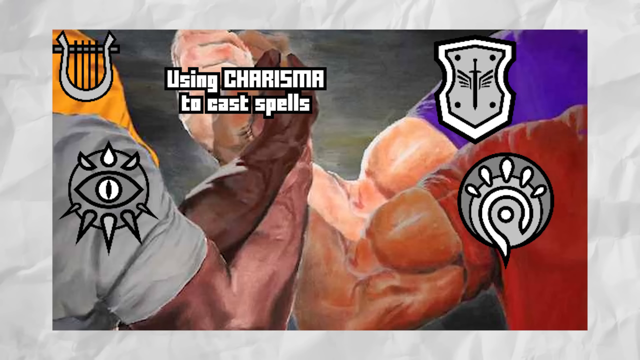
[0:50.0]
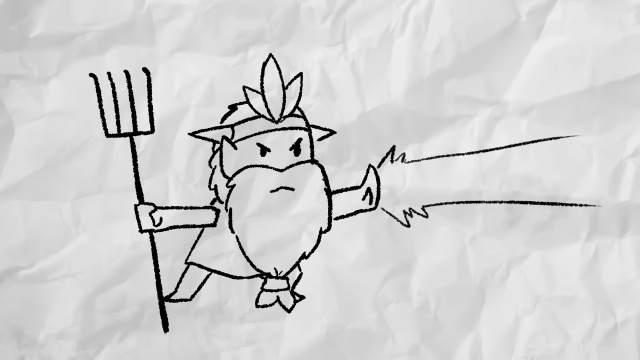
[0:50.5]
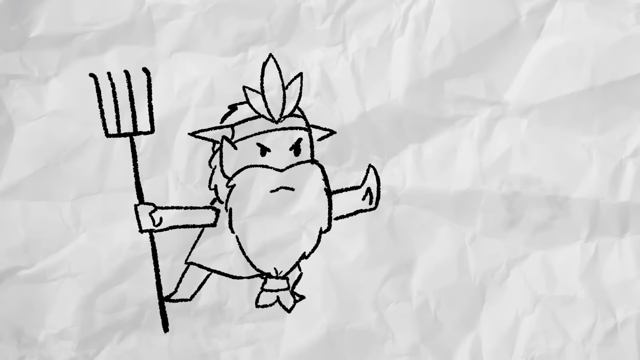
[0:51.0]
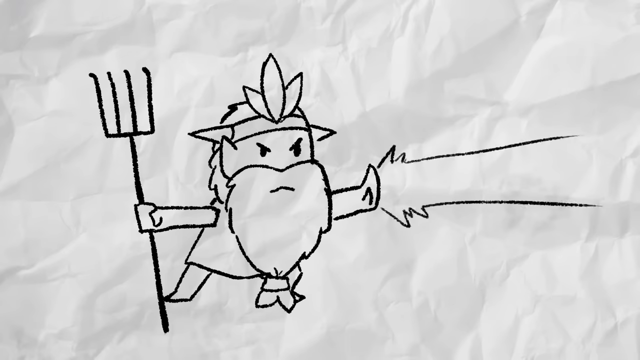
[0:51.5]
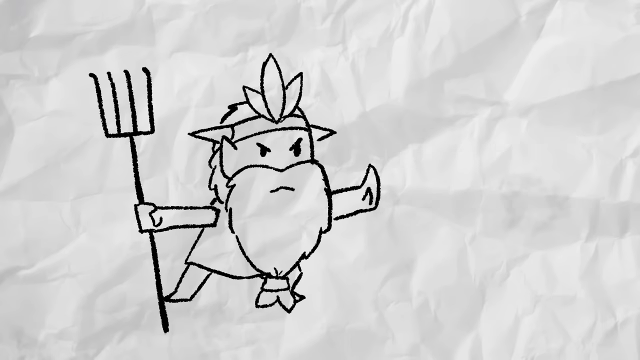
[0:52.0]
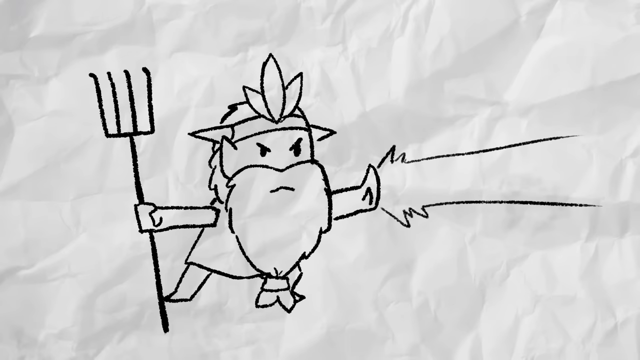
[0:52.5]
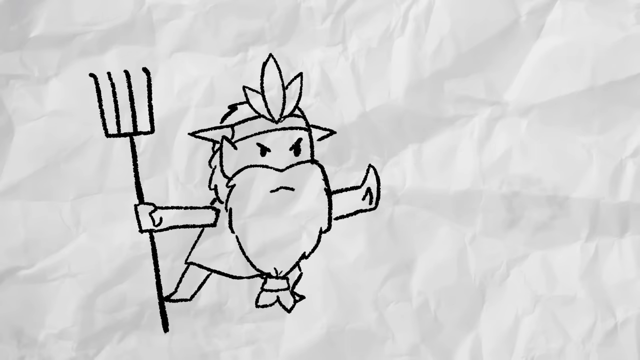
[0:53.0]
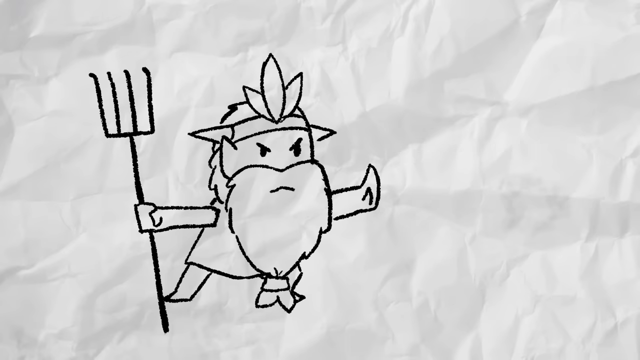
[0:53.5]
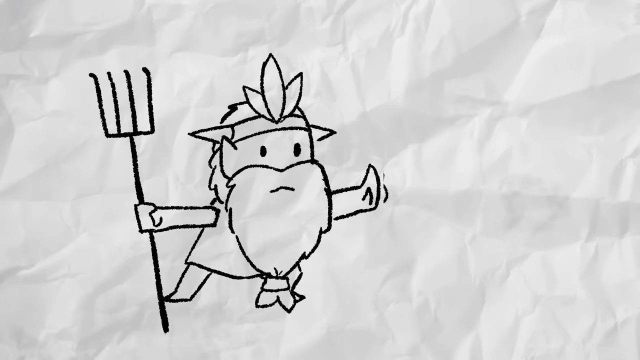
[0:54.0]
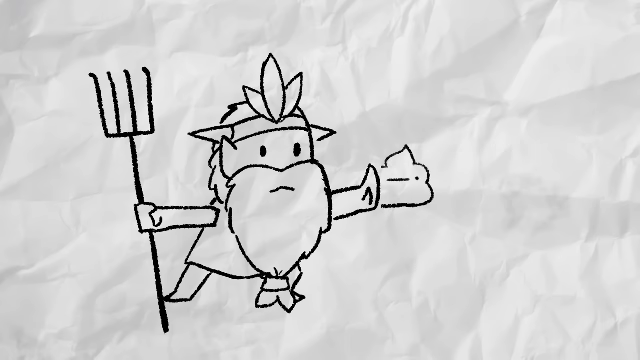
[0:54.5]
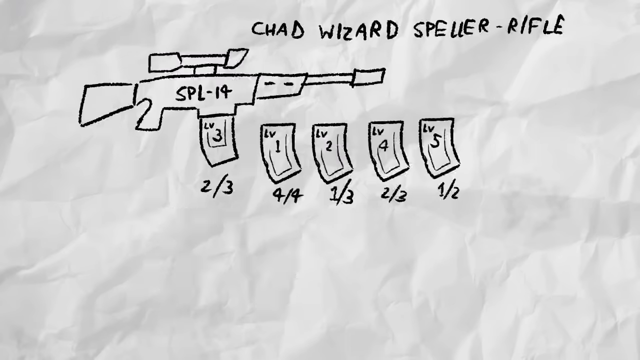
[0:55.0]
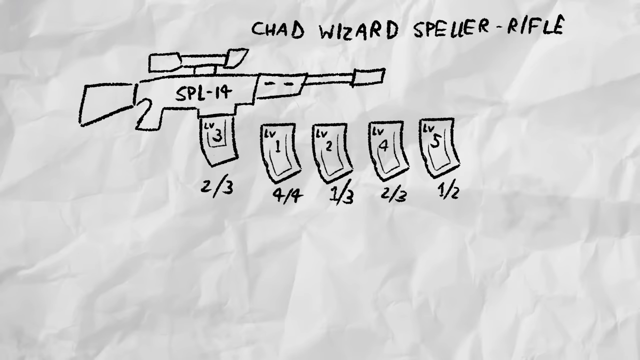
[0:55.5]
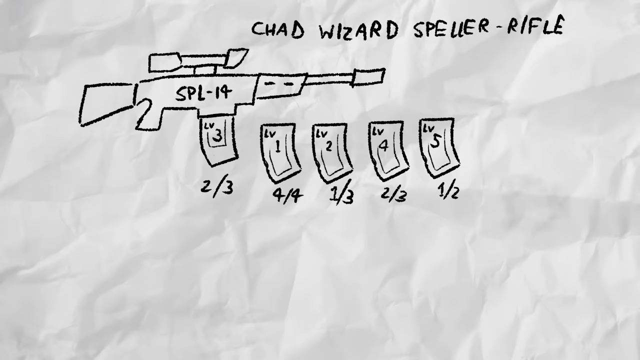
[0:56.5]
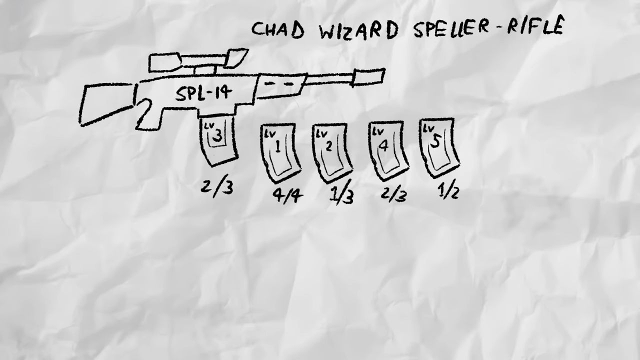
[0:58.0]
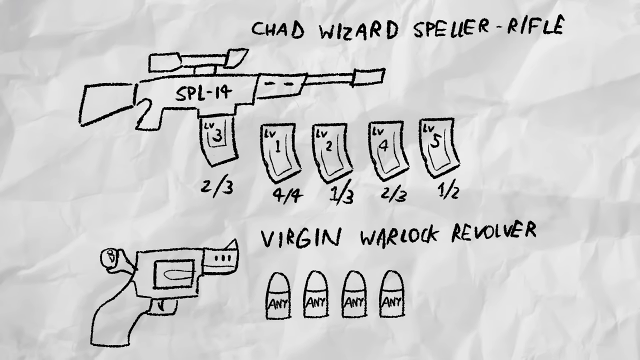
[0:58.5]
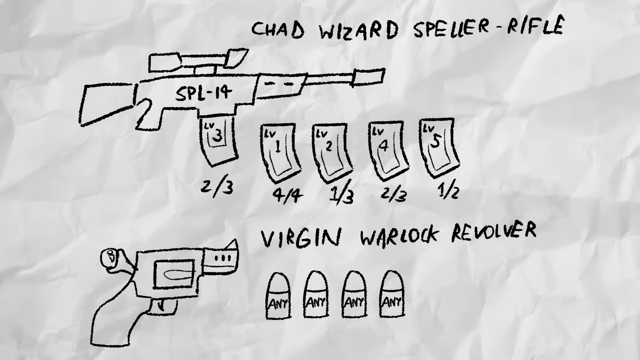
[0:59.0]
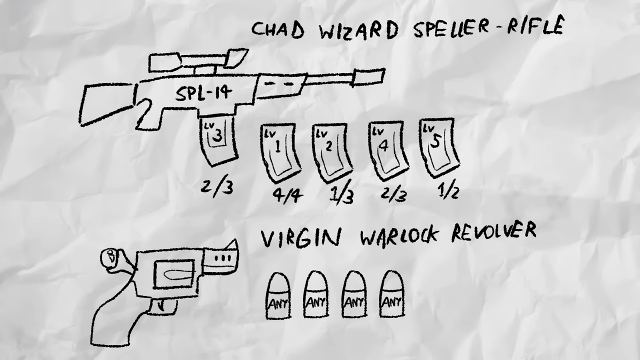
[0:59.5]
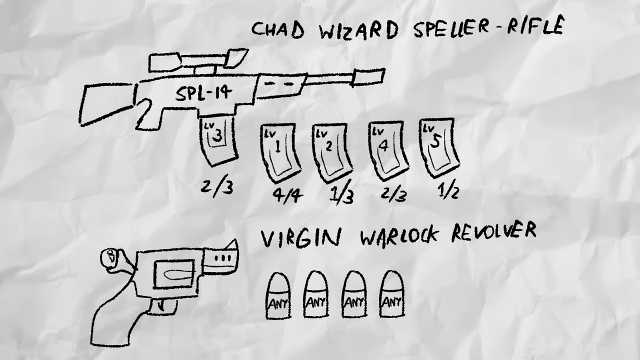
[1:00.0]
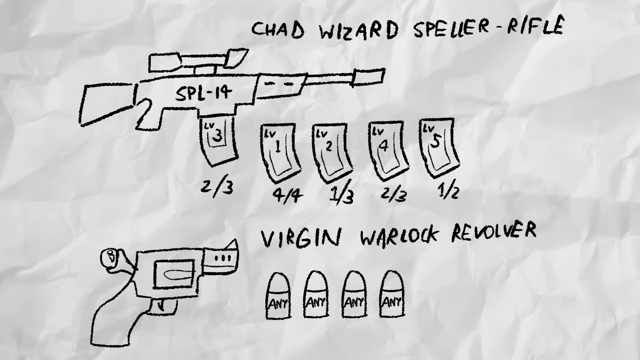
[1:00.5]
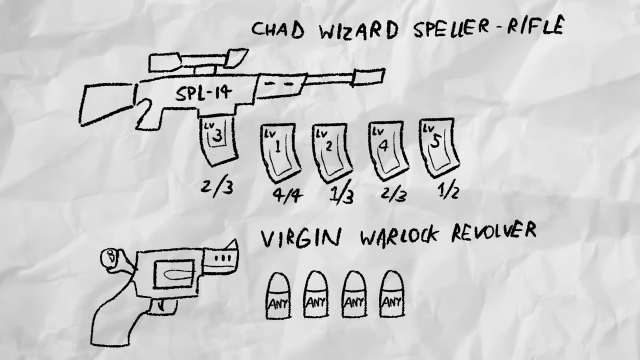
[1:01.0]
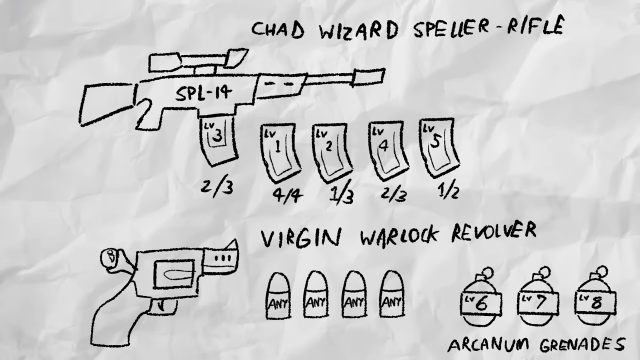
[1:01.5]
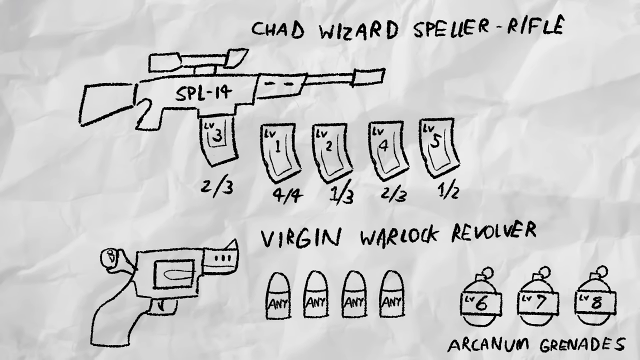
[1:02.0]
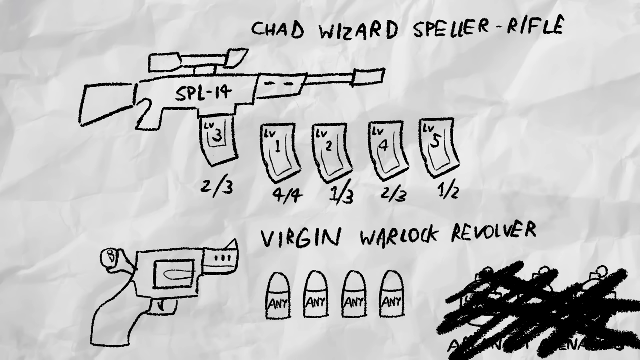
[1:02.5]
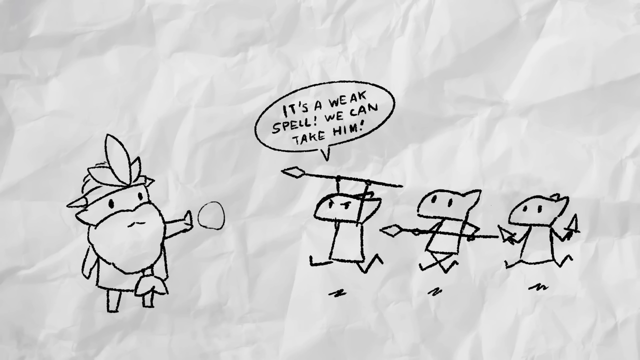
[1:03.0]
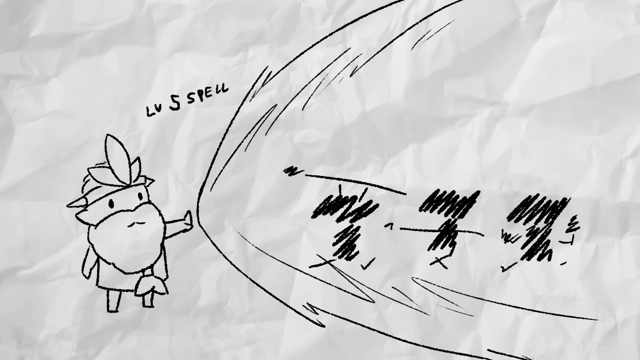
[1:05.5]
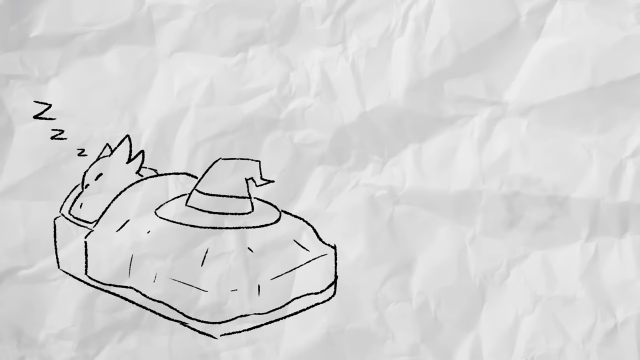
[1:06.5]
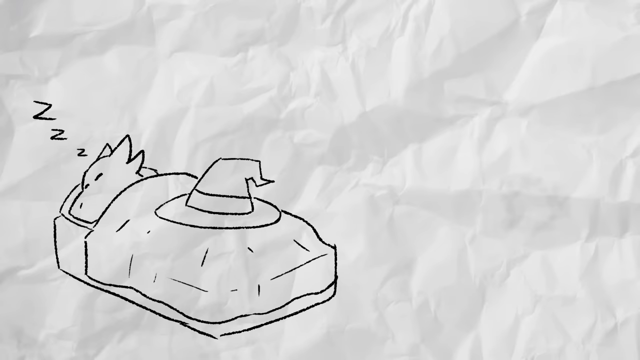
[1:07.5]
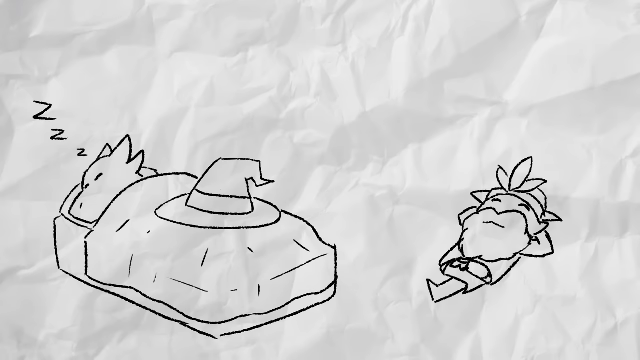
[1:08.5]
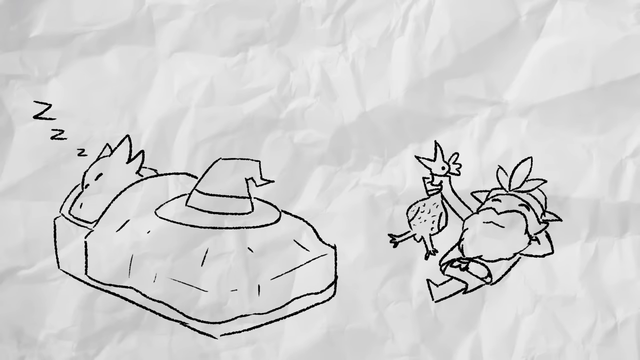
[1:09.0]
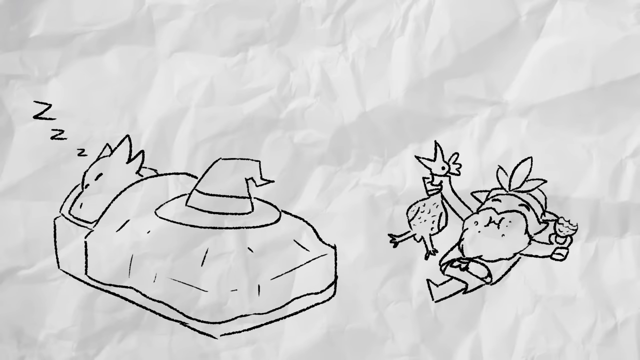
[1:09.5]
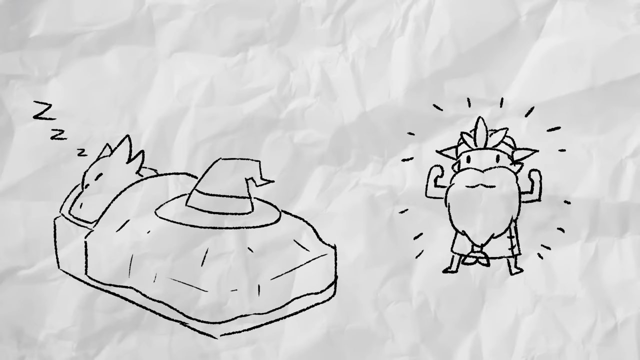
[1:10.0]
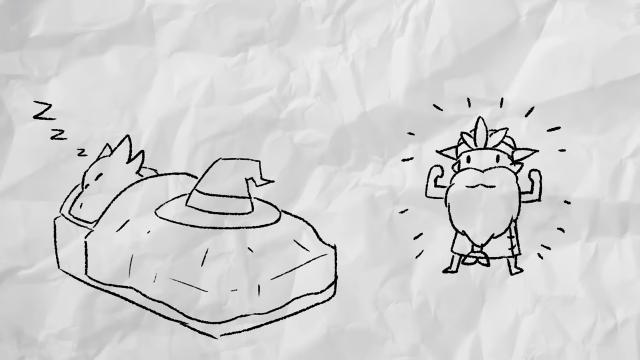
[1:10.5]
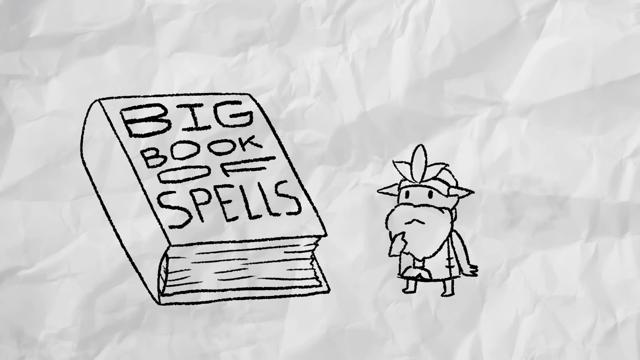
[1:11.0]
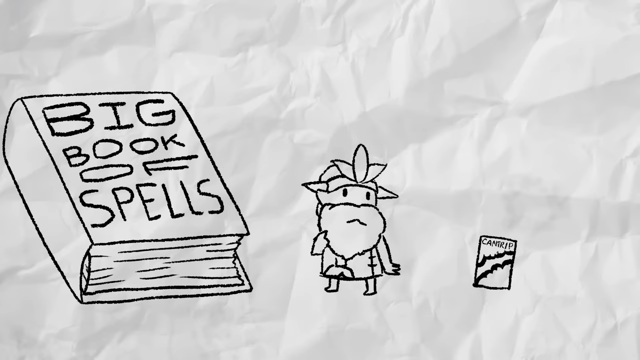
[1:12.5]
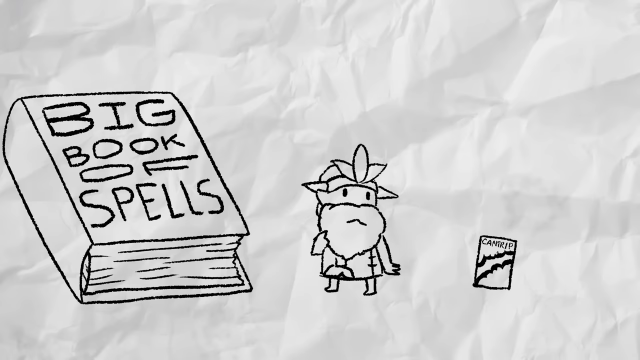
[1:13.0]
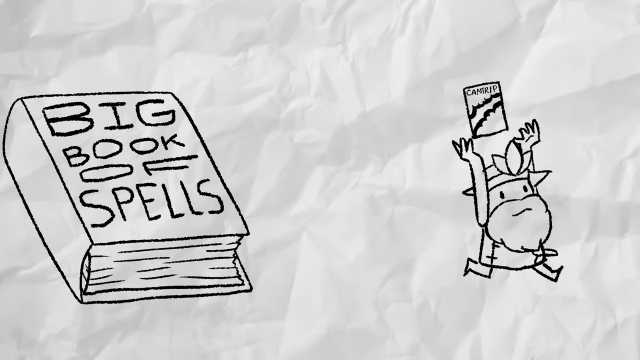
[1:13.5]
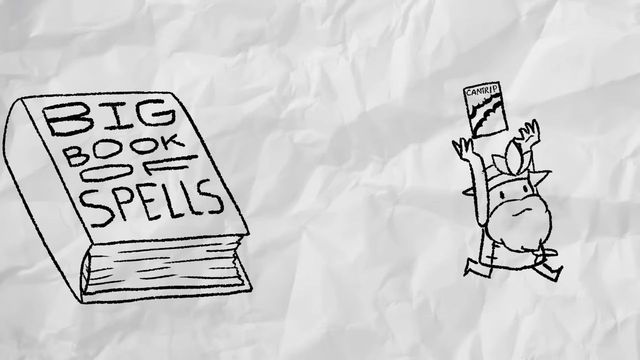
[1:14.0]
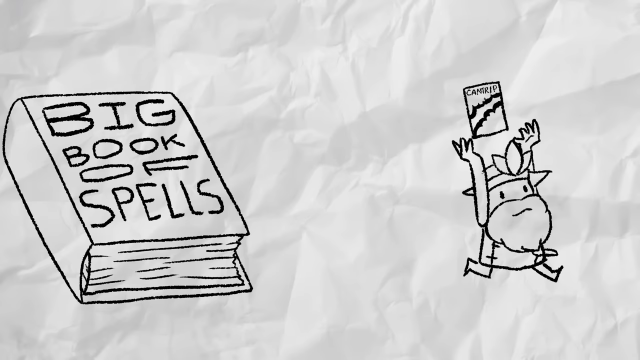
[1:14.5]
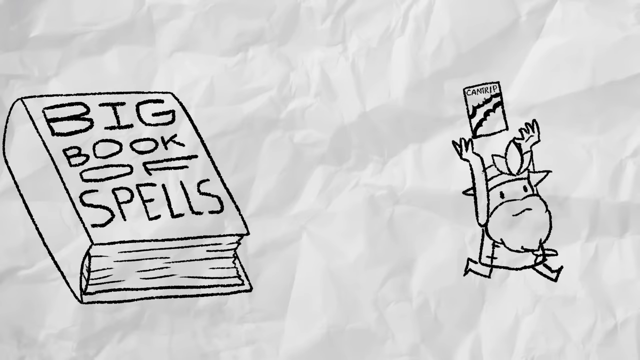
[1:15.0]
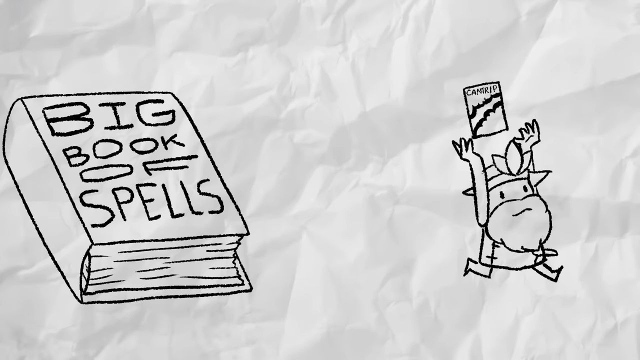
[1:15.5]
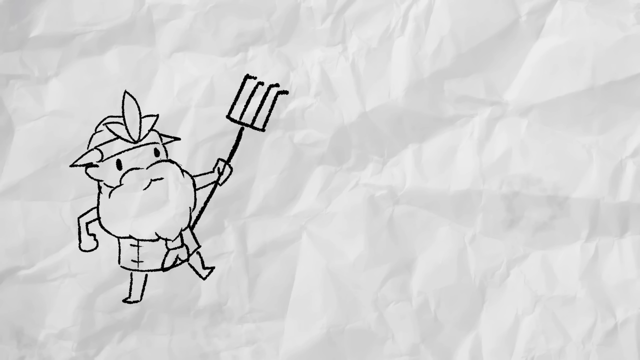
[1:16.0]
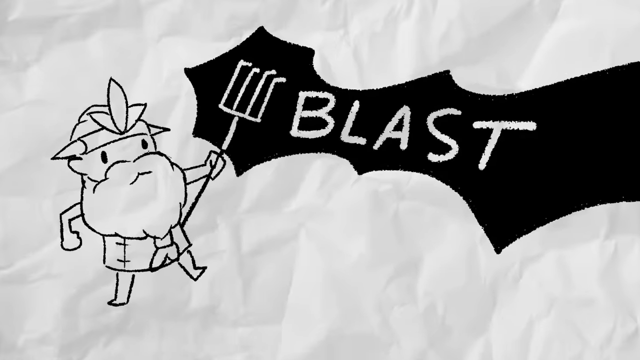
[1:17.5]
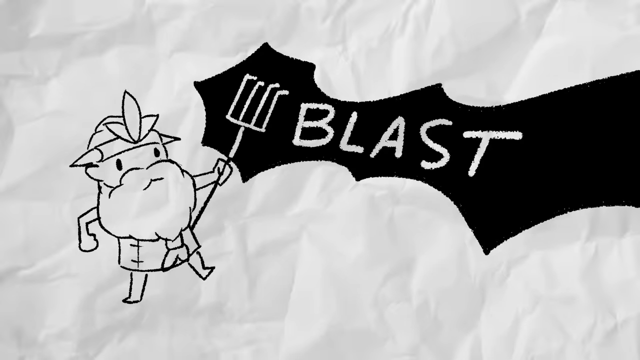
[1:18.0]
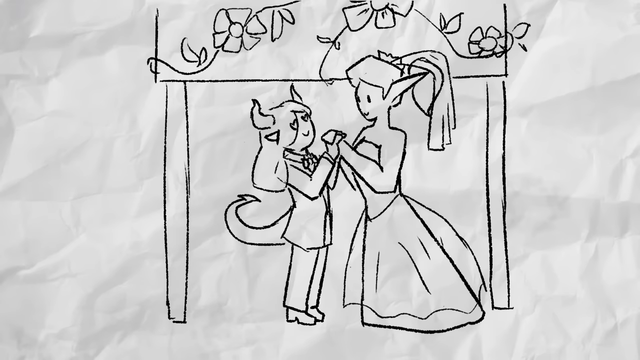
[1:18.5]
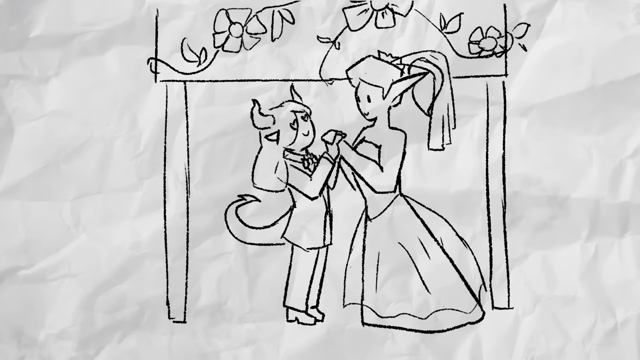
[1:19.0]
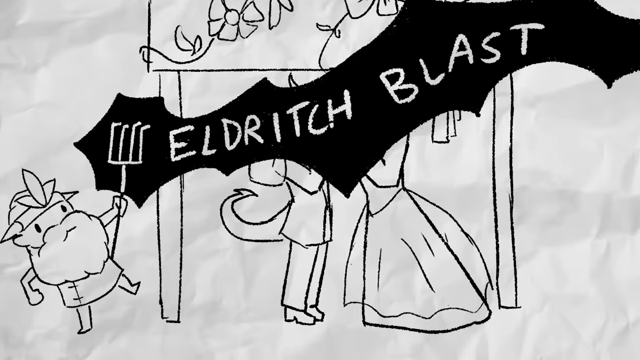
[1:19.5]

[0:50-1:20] A meme from the movie Predator shows strong men clasping hands, with a black man interlocking hands, and text reading "using charisma to cast spells". Dungeons and Dragons logos appear along the video. The animation then returns to the hand drawing on crumpled white paper, with stick figures and text reading "Chad Wizards Special Rifle" and "SPL-14 Inversion Warlock Revolver", along with an LV-5 spell. One character is sleeping while another character looks at him, and there is a hand drawing of the Big Book of Spells. A character casts spells in different types of situations.